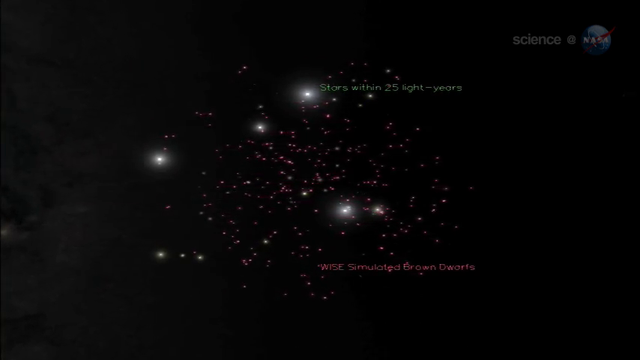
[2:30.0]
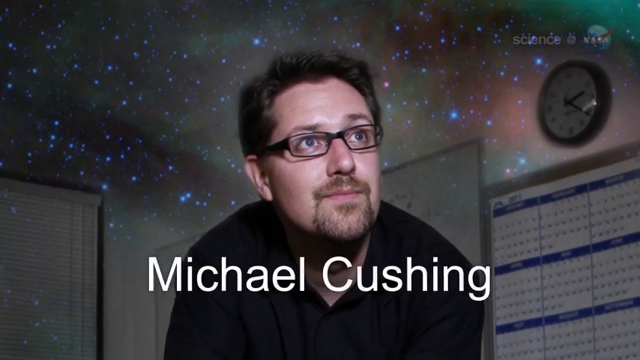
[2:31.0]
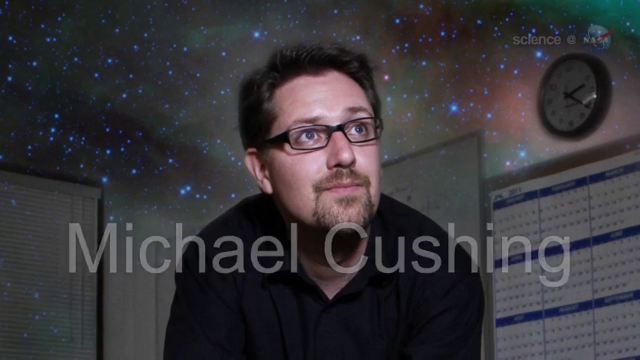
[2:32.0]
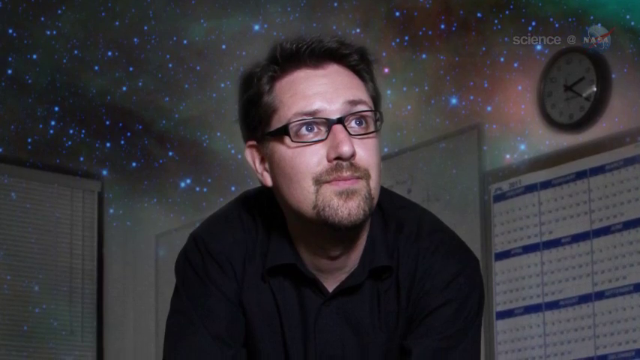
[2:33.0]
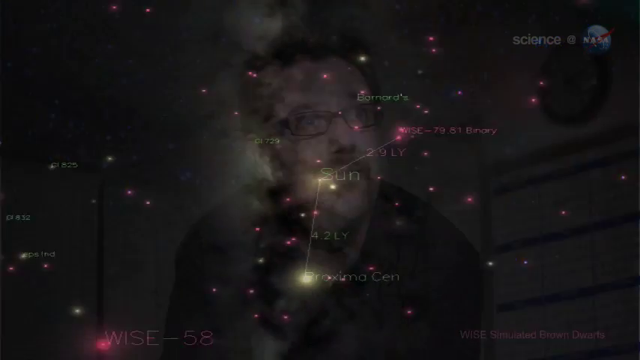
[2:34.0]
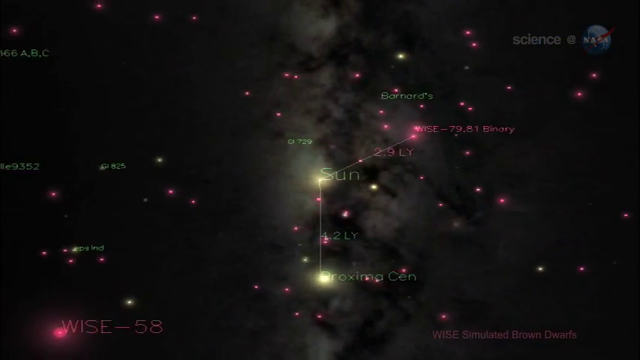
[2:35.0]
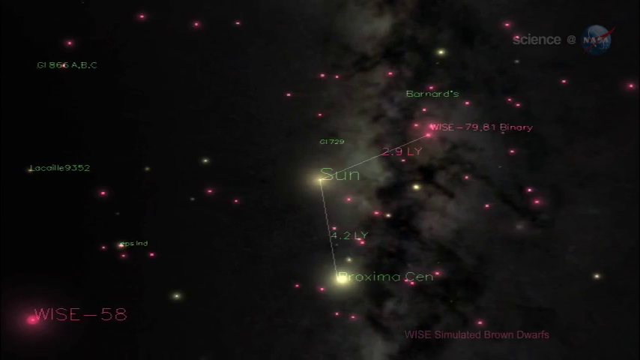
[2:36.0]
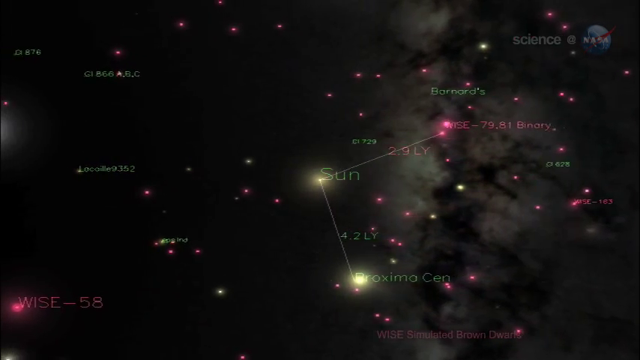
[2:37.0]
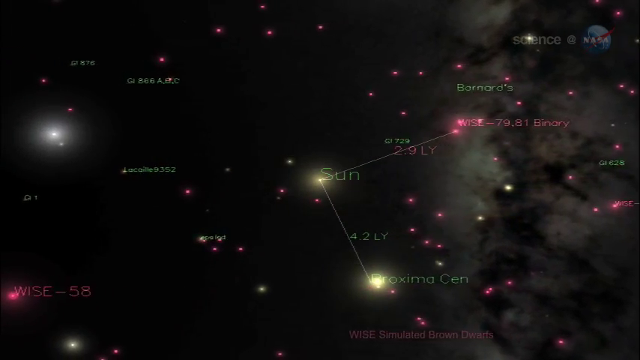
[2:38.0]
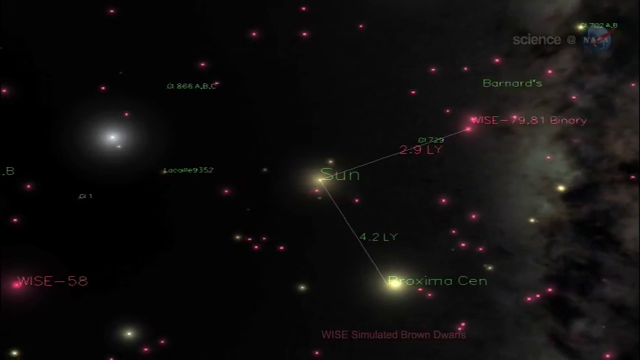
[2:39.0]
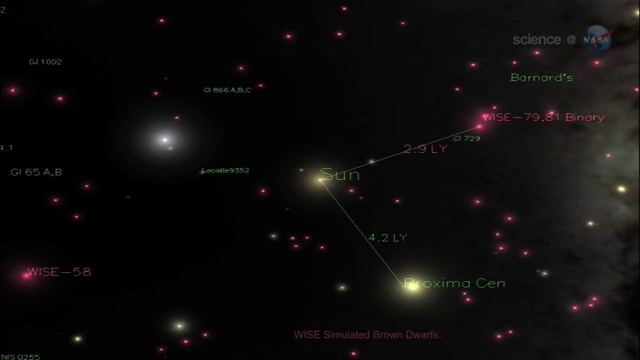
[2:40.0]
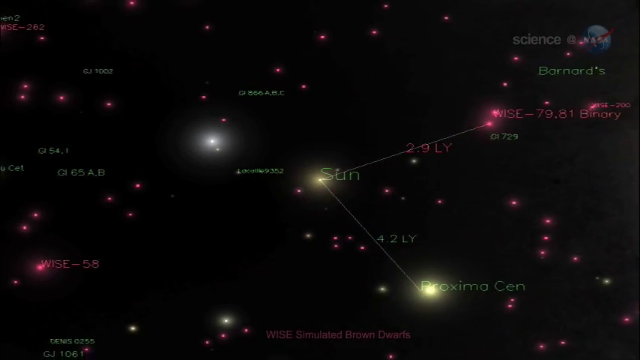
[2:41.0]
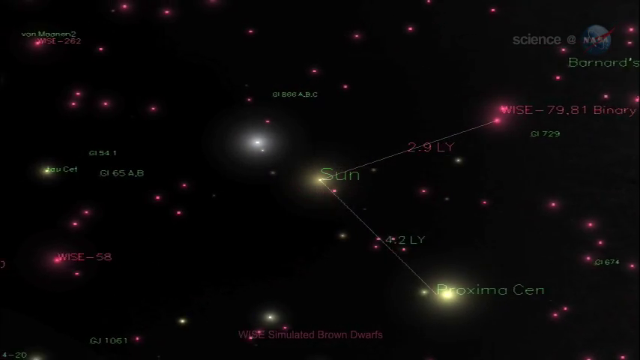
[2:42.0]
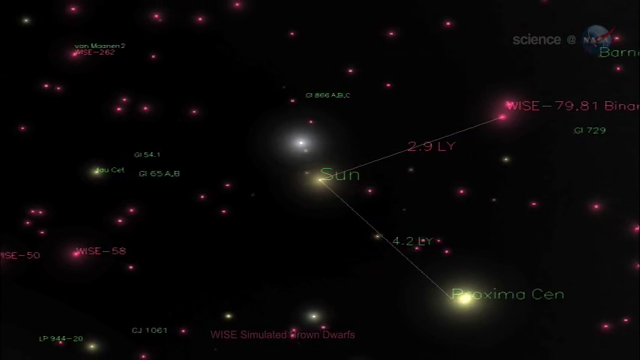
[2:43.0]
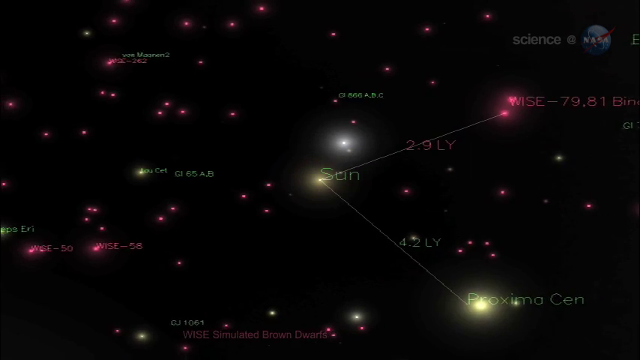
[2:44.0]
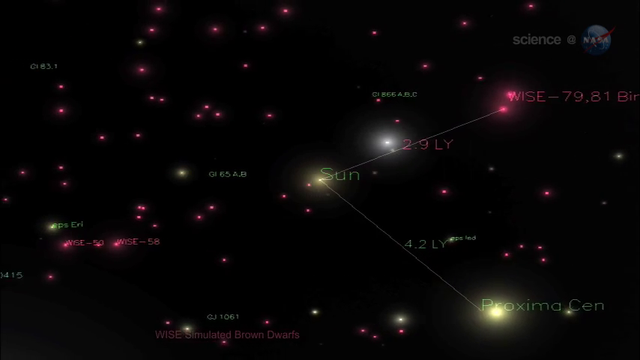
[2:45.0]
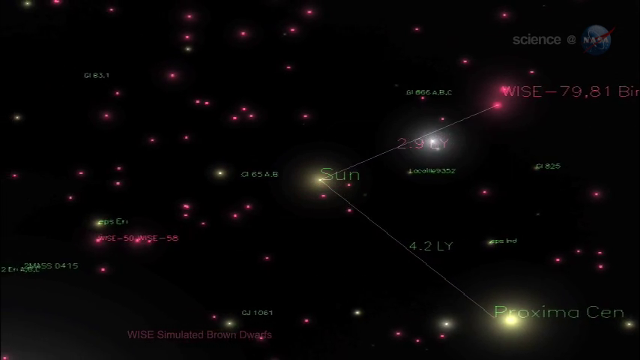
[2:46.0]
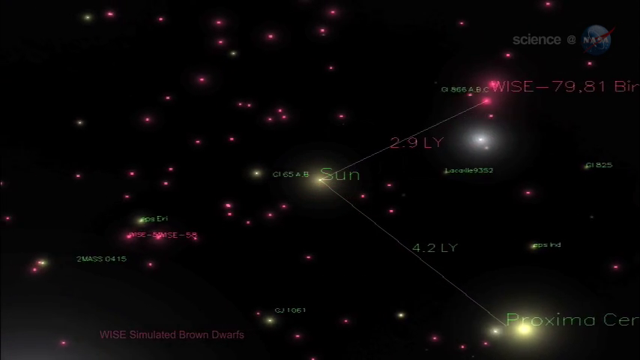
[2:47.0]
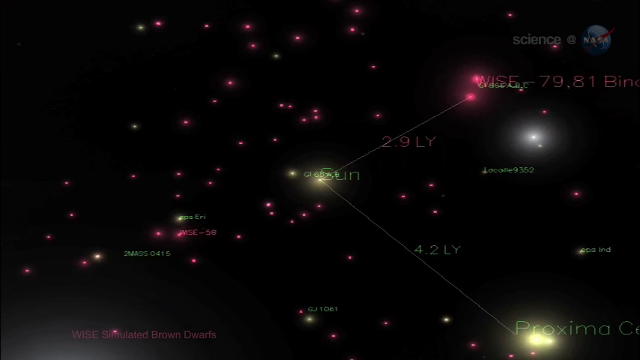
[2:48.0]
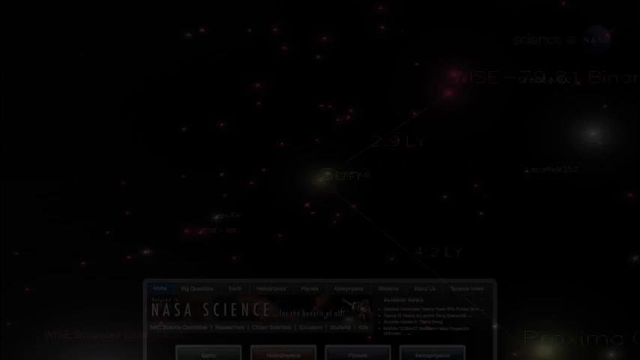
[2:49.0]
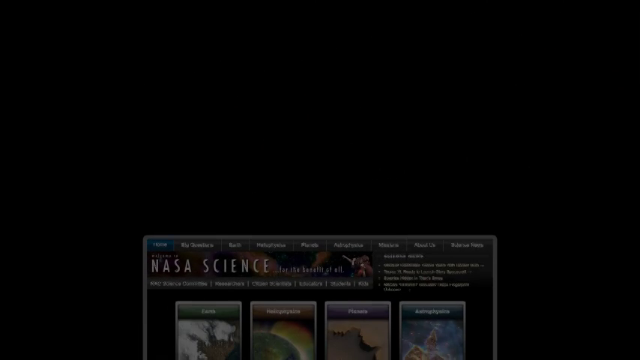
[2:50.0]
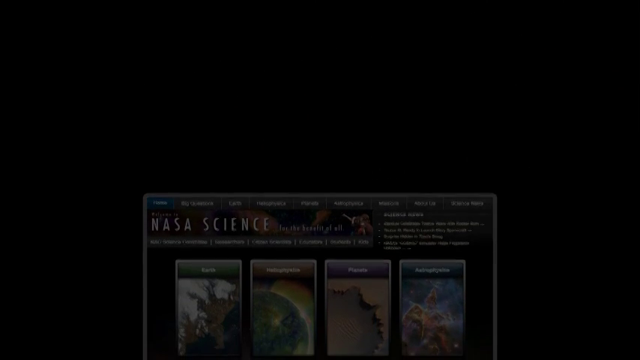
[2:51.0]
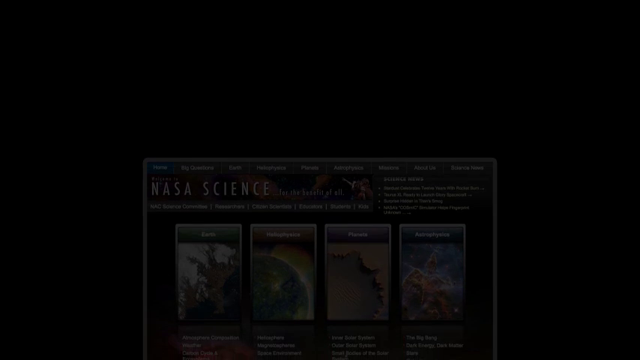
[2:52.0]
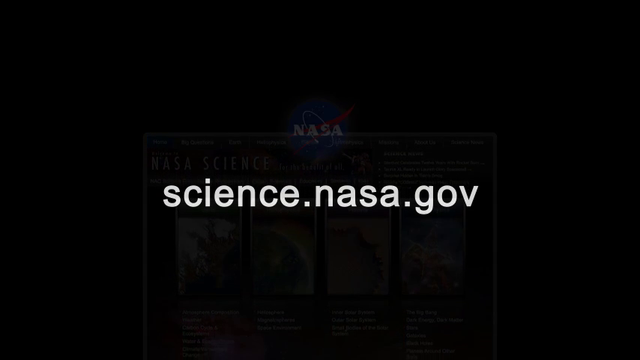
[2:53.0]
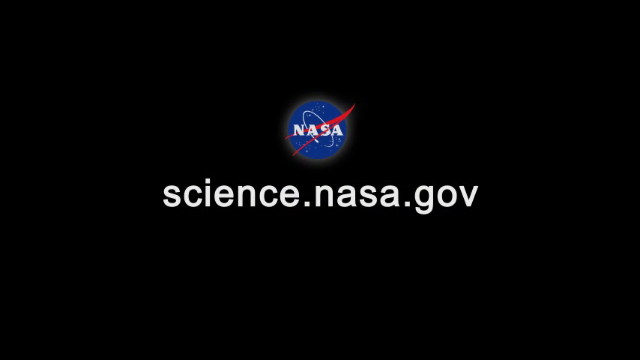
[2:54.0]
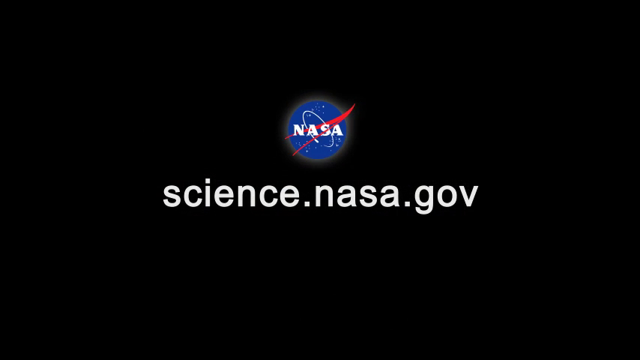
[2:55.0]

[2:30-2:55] Space and its many stars continue to be shown with the text about stars within 25 light years and simulated brown dwarfs. The video cuts to a picture of a man who looks like he is in some type of office, with a candle behind him at the bottom right and a clock above it, and a window blind on the left. He wears thick-rimmed glasses, has a beard, and looks away from the camera, with white text below him. It then cuts to a galaxy showing the Sun, with what look like many lines stemming from it below, showing the locations of different types of stars and other things around it; some are labeled "binary" and some show numbers, possibly the locations and coordinates of these stars. It then cuts to a type of graph and a website named "nasa science" showing different things. Finally the NASA logo appears, and at the end of the video "science.nasa.gov" is shown in white text on a black background.